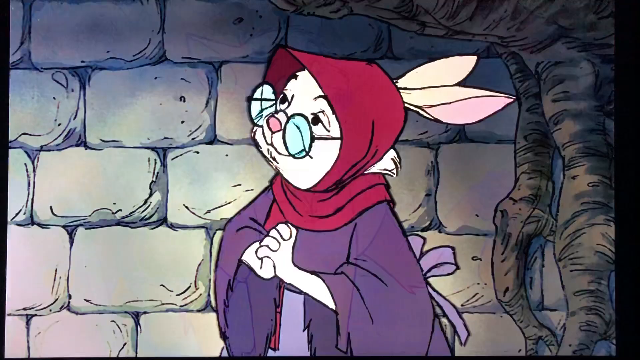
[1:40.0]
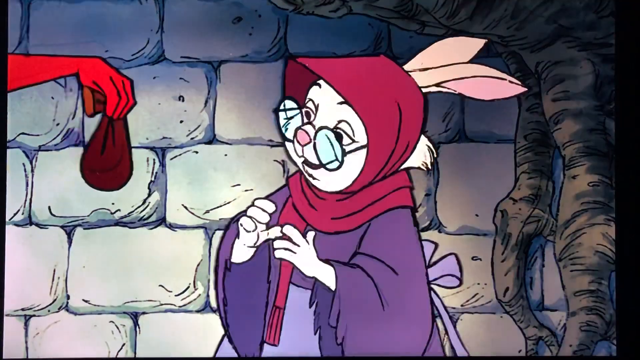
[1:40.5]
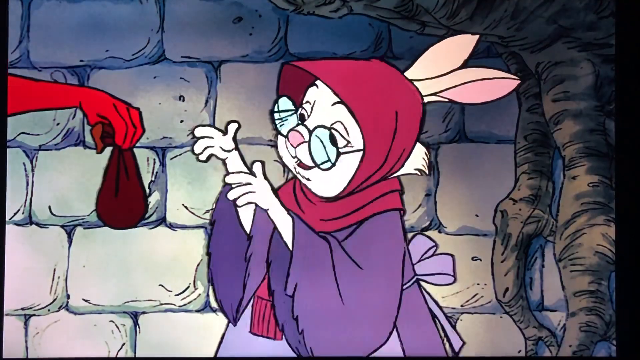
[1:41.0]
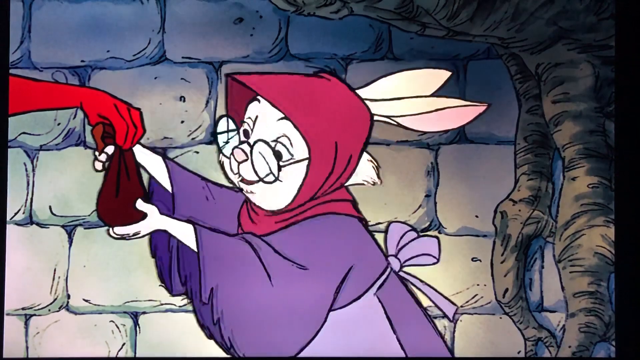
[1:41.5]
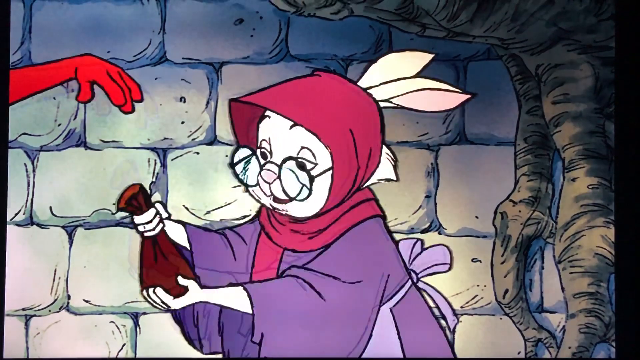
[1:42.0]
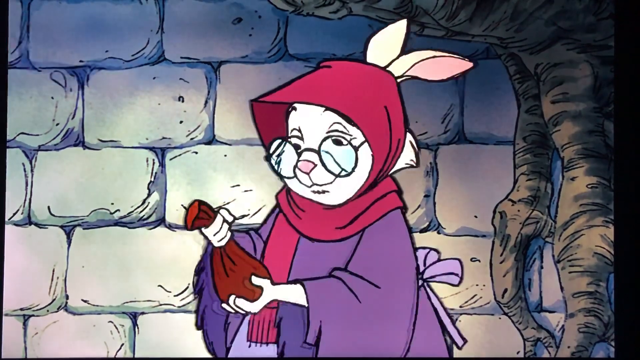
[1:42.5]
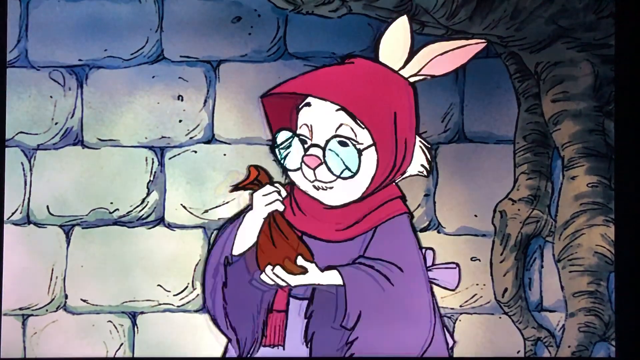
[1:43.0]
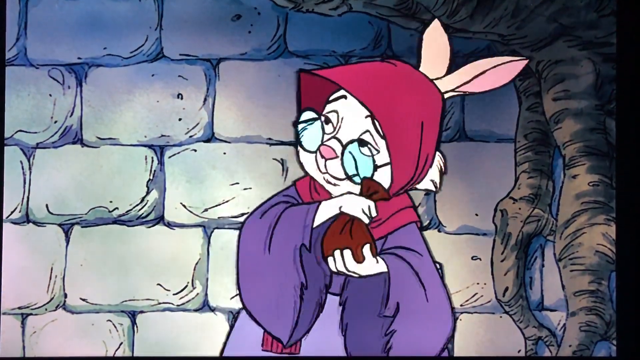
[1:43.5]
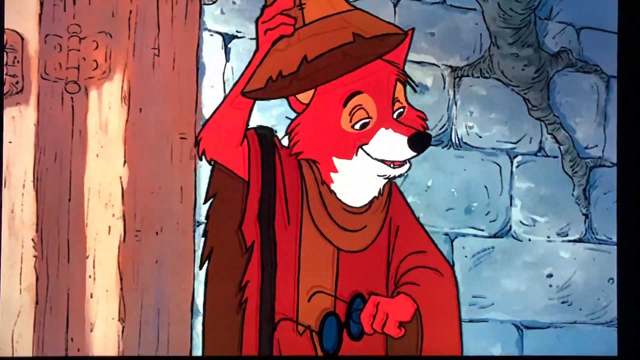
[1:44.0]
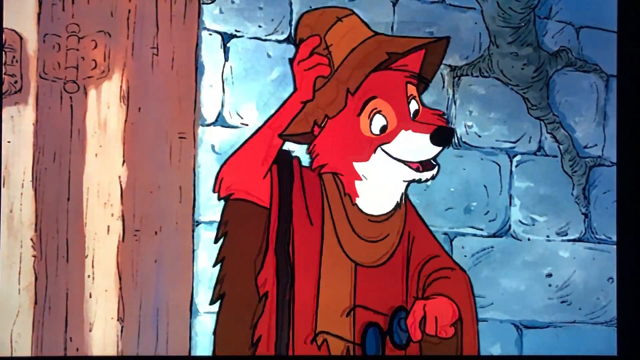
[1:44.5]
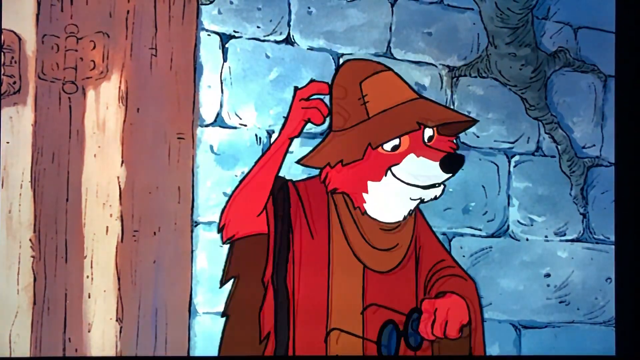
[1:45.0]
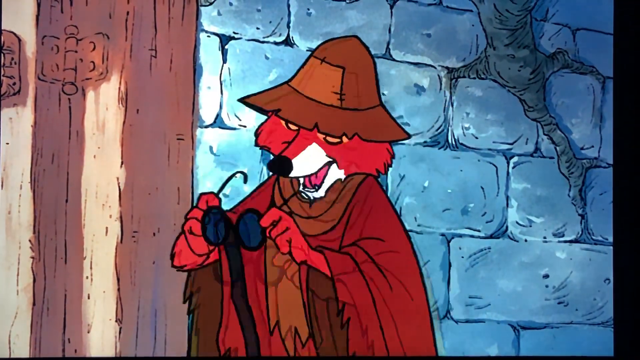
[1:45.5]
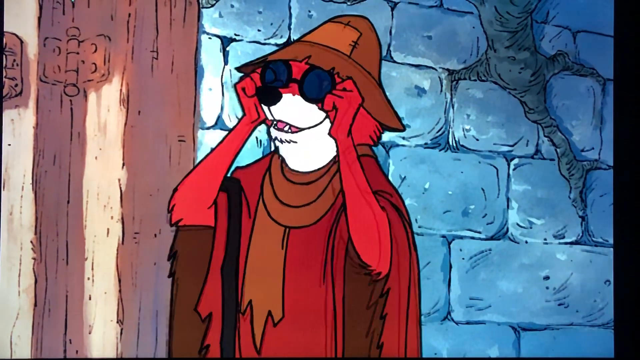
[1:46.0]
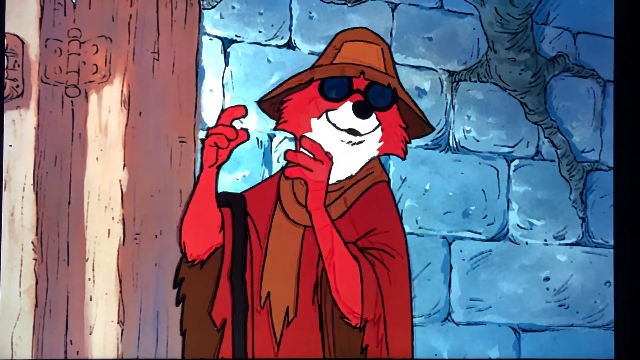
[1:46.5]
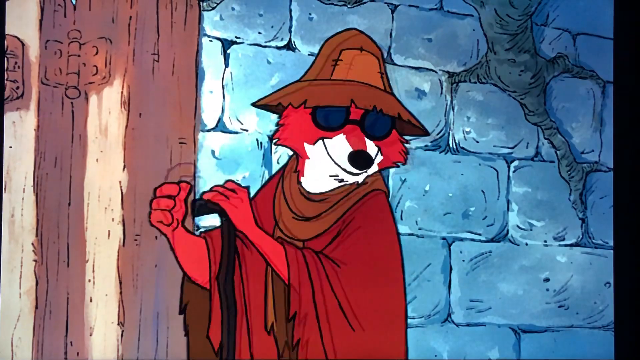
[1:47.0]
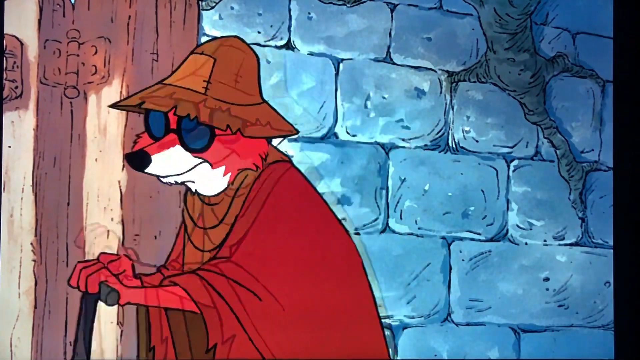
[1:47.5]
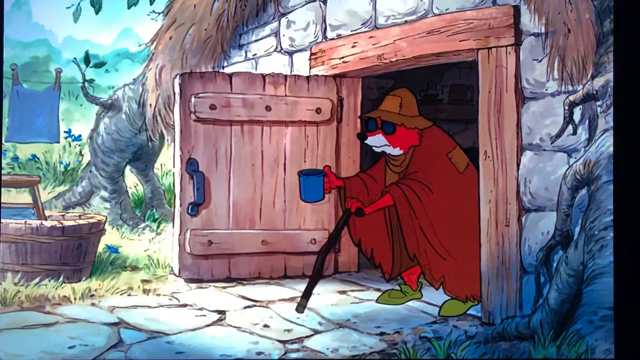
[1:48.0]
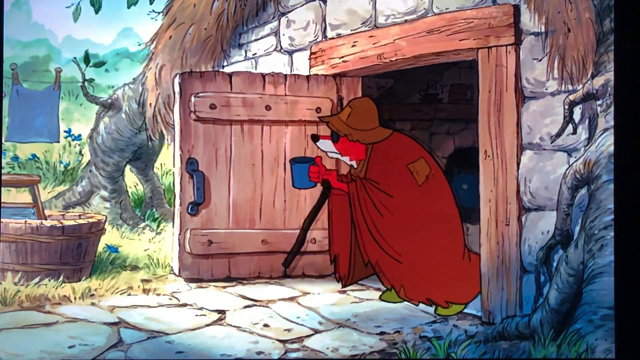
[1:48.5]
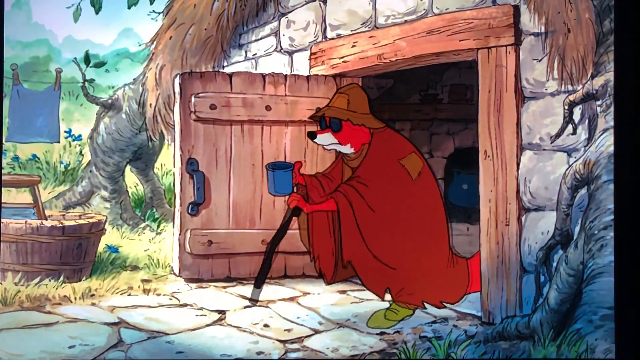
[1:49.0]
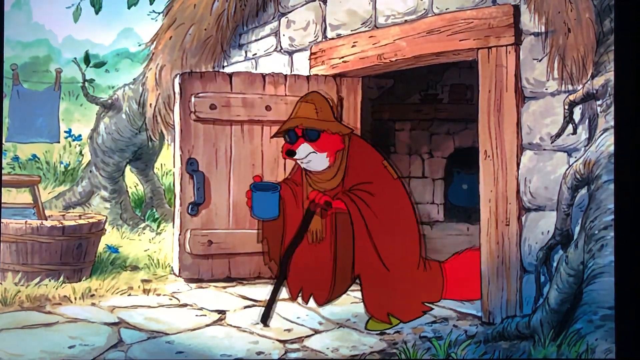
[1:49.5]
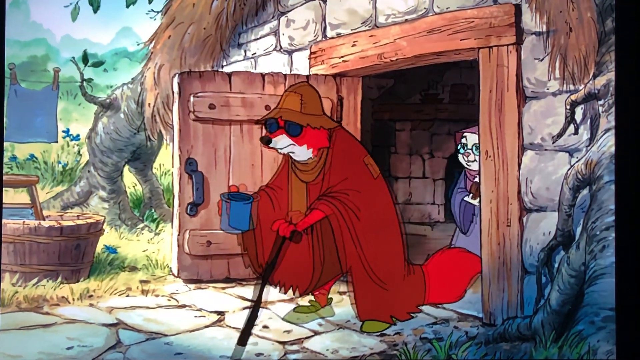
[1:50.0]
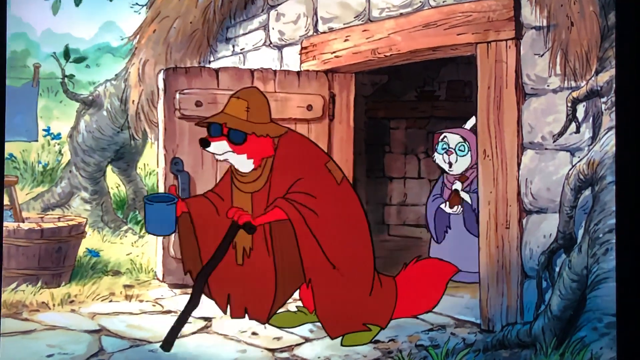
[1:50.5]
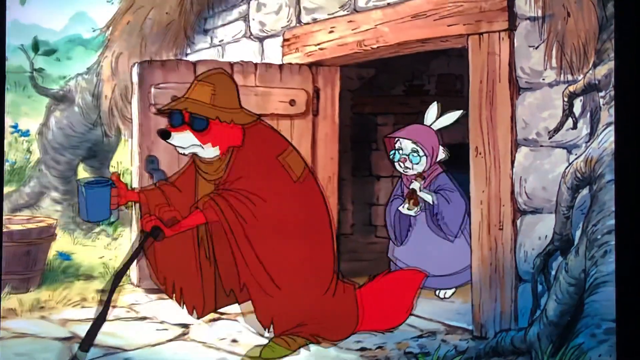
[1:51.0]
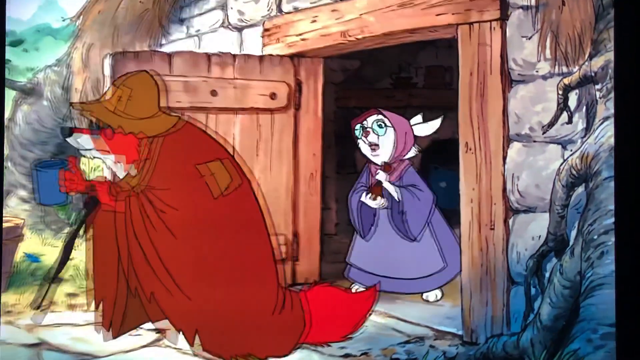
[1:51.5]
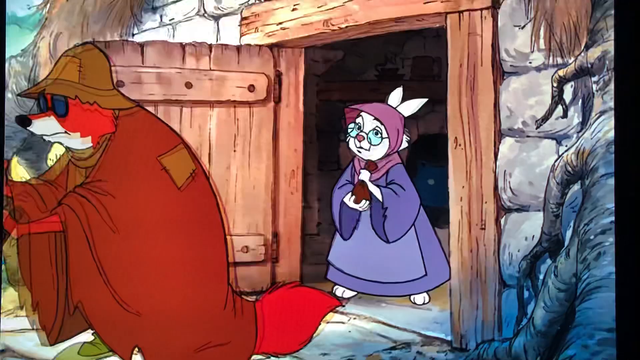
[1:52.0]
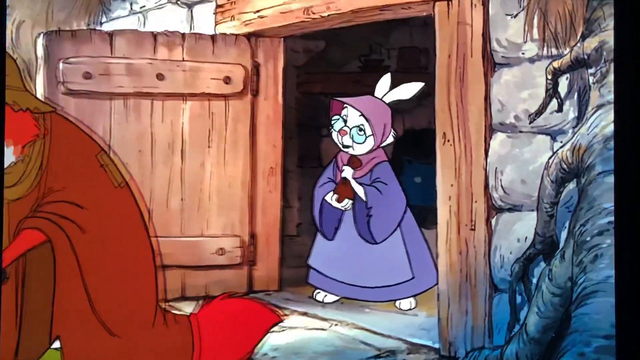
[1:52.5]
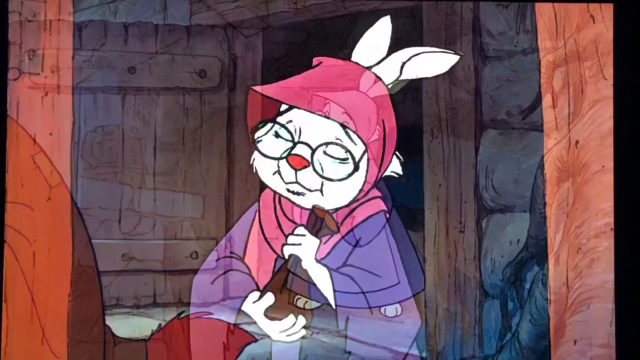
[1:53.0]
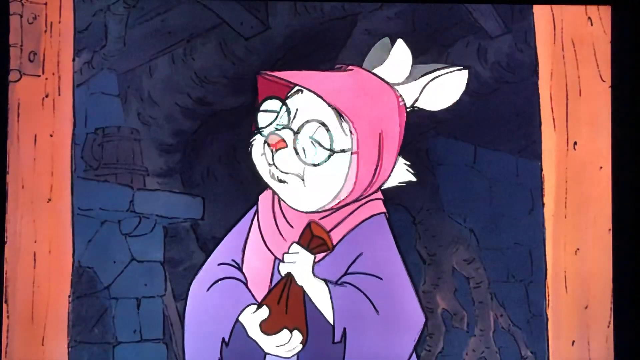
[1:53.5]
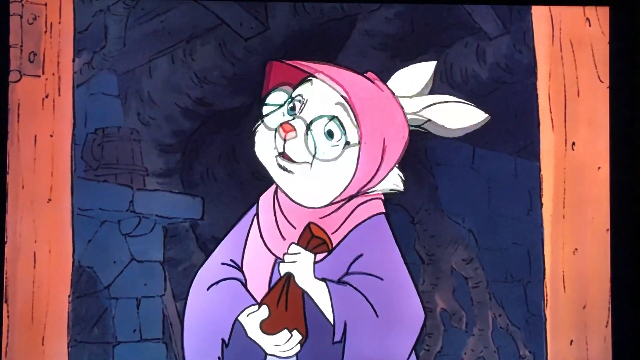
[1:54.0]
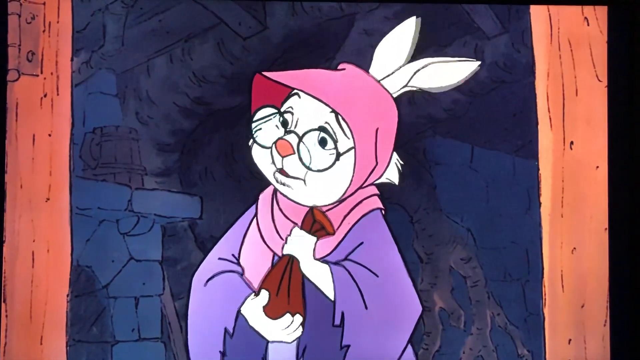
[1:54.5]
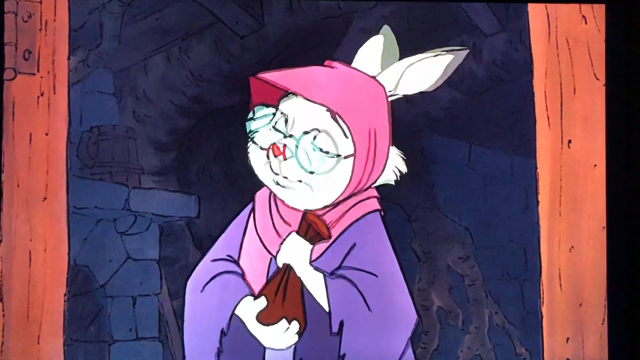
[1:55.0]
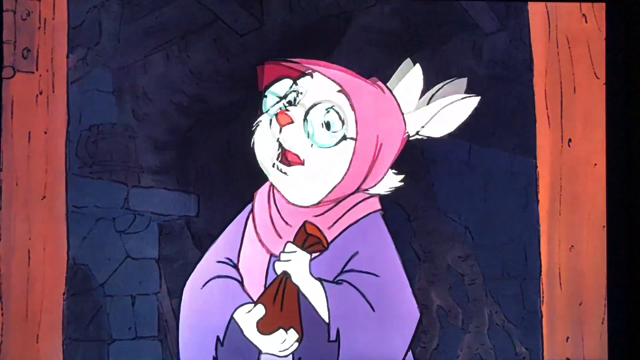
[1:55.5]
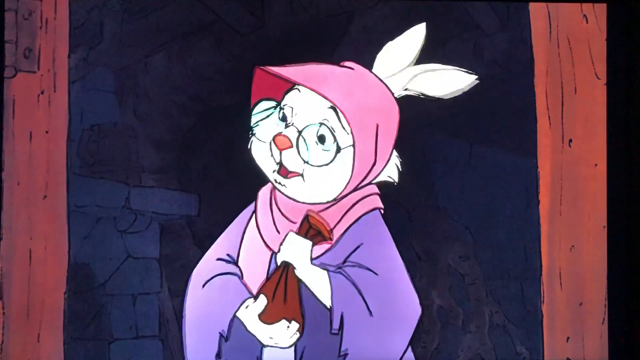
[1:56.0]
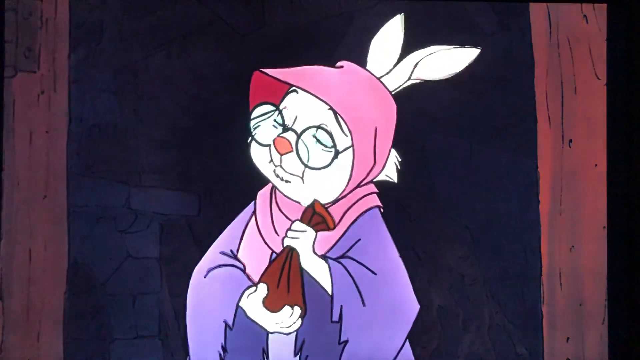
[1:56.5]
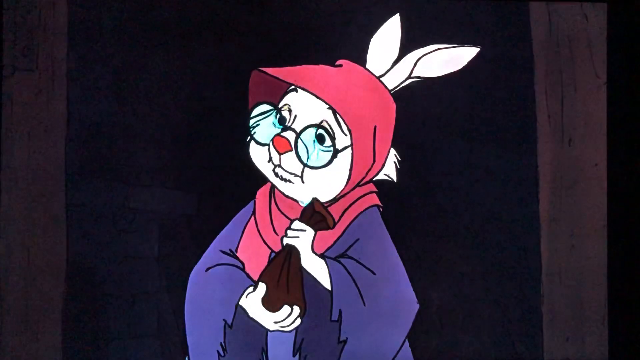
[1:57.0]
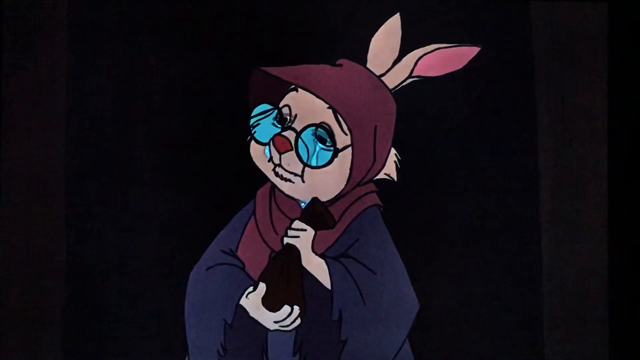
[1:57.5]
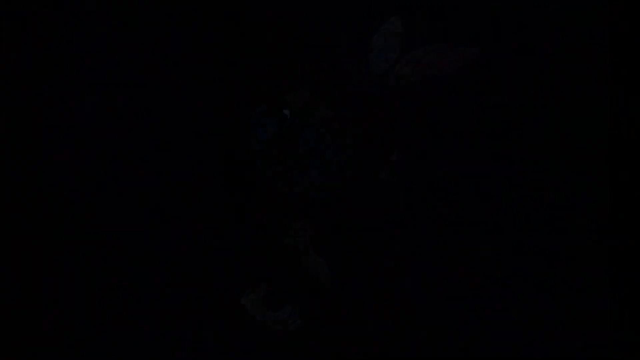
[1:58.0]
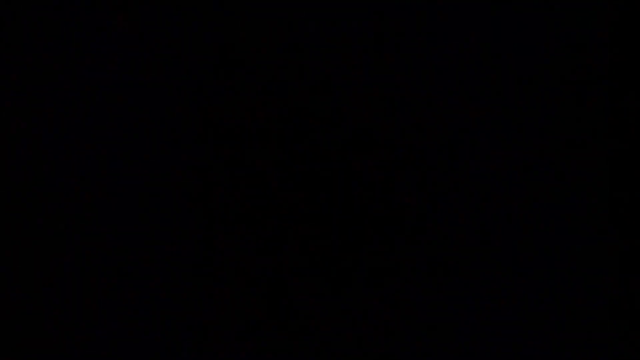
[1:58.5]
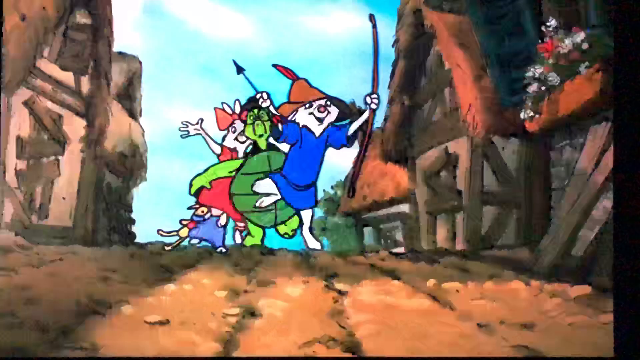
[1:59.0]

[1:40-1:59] The Robin Hood fox hands the mother a pouch that has money in it, and she is very thankful. The fox puts his old hat, cloak and glasses back on, becoming an old beggar fox again, and walks out of the house with his mug, apparently acting as if he is old or cannot walk very well. The mother bunny looks very happy and watches him leave, holding the pouch, and is in tears, probably saying thank you over and over.